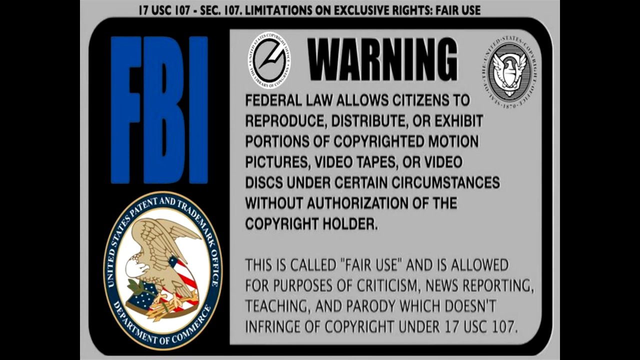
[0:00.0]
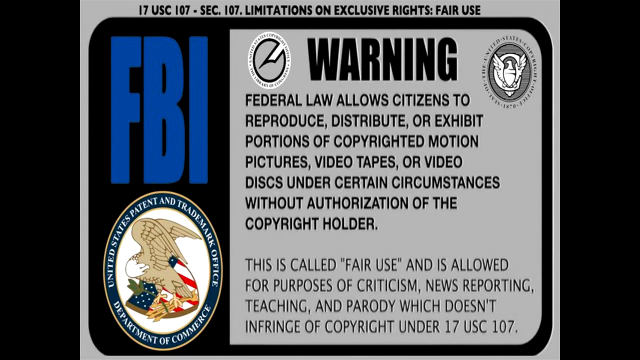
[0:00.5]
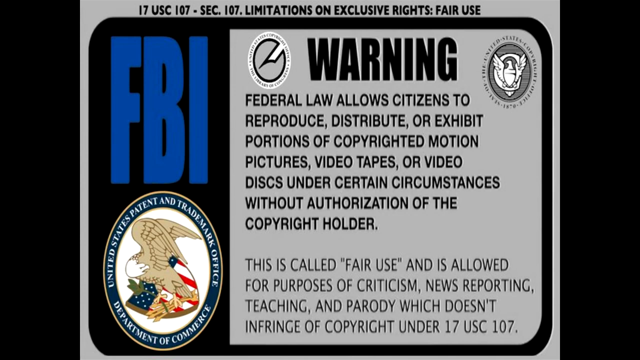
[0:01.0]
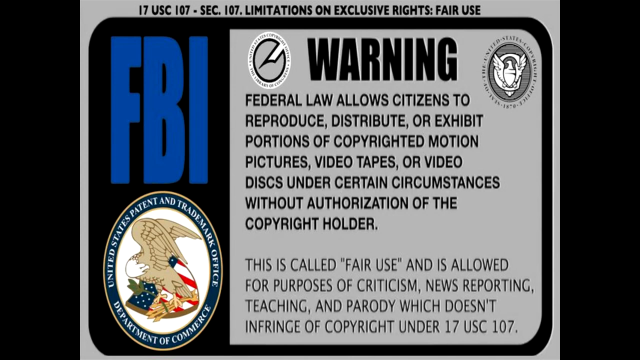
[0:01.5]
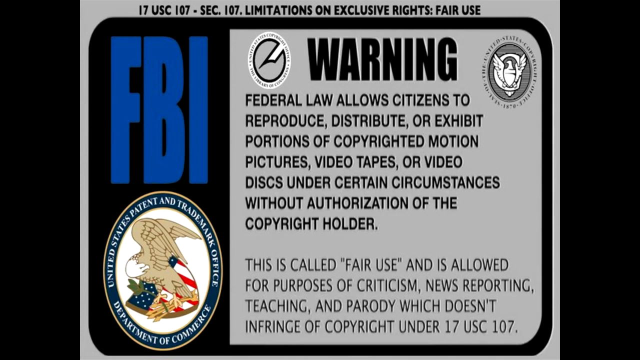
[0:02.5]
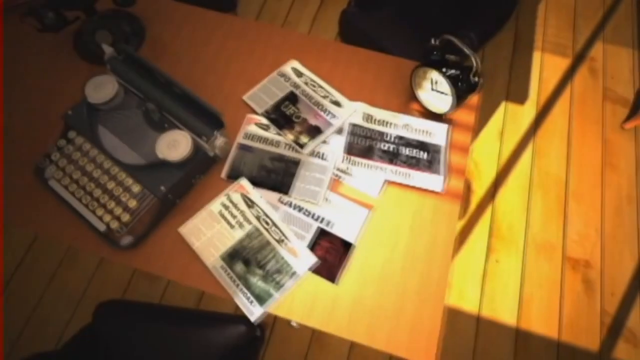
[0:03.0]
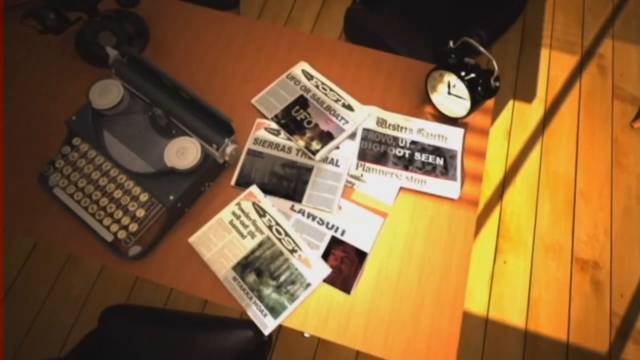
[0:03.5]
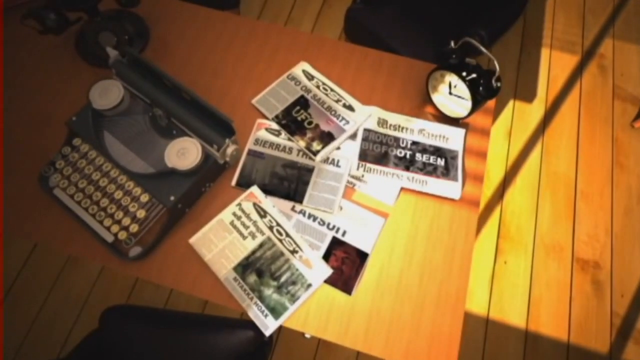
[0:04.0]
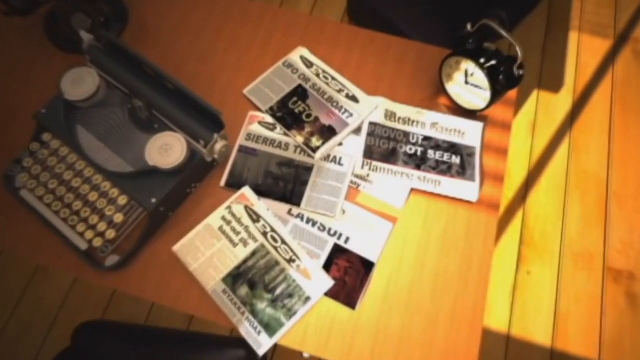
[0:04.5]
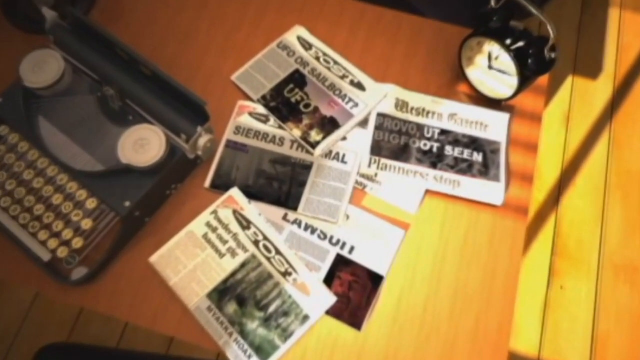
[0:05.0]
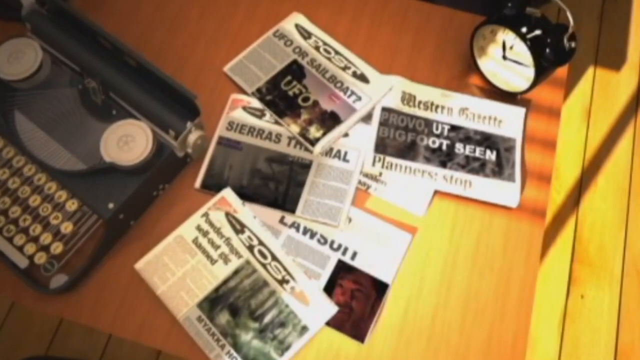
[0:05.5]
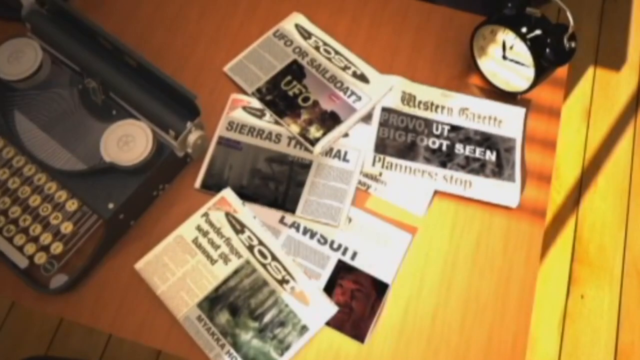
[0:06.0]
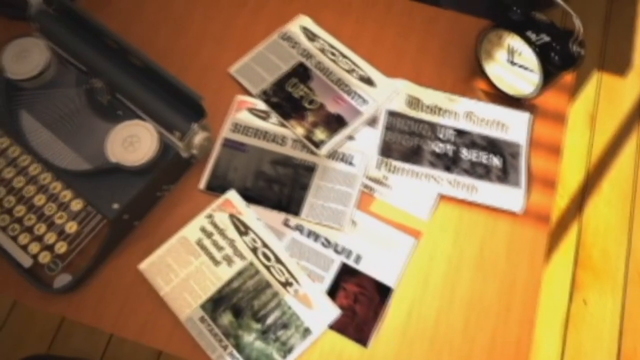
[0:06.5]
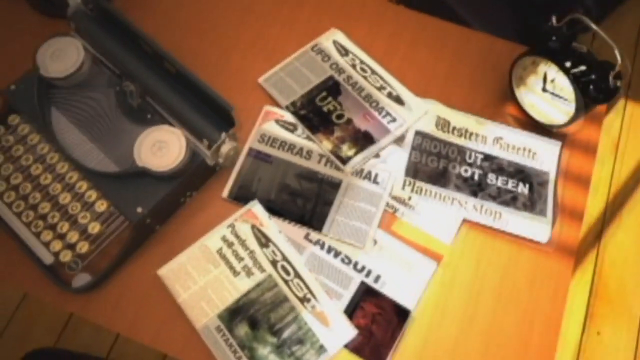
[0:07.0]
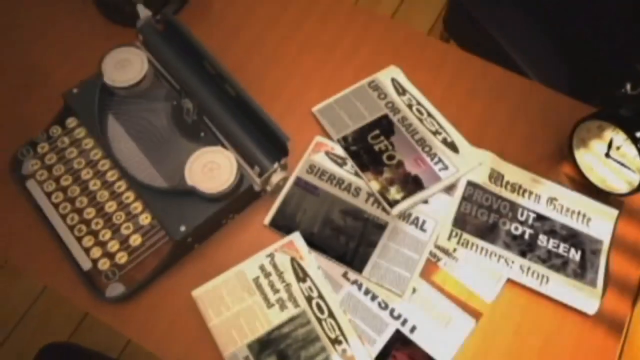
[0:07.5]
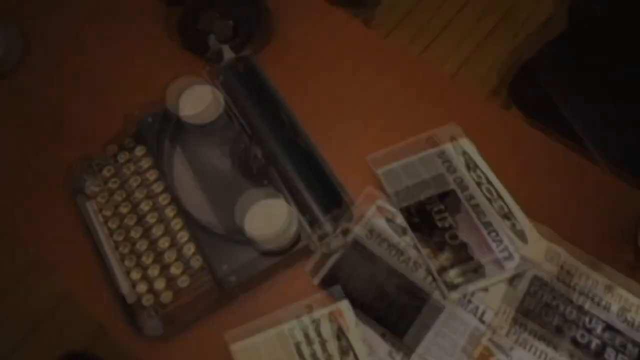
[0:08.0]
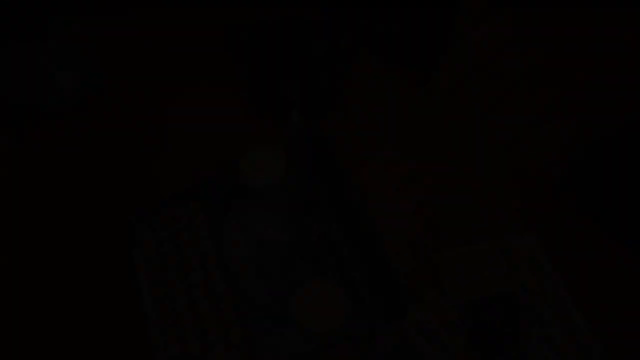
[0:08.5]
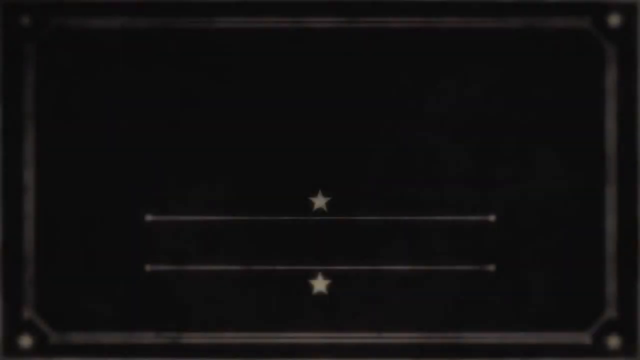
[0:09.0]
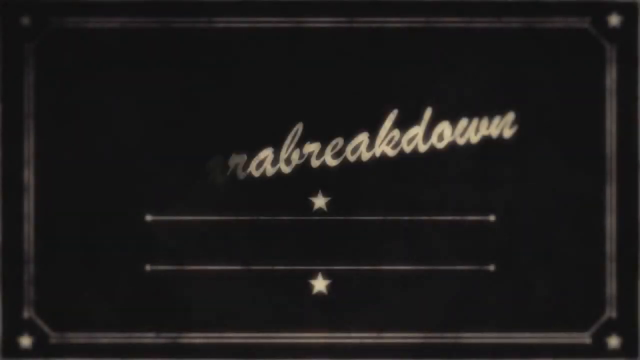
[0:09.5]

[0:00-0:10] The video opens with an FBI warning. The warning is in what looks like a black frame, with "FBI" written in blue, an eagle FBI logo, and some warning text. The whole thing is on a grey background, while the FBI lettering and logo are within the frame on a black background. The view then switches to a top-down shot of a typewriter on a table, along with a bunch of newspapers (five are visible) and an old clock. Sunlight comes into the room from the right, brightly lighting the room a little, and there is a shadow that is possibly cast by a window frame. The camera zooms in toward the newspapers on the table, then suddenly turns left to the typewriter before the screen blacks out.